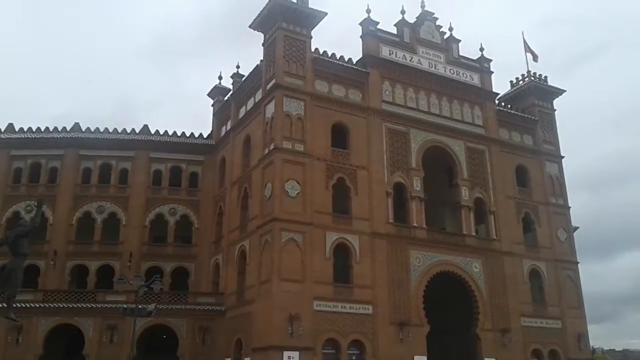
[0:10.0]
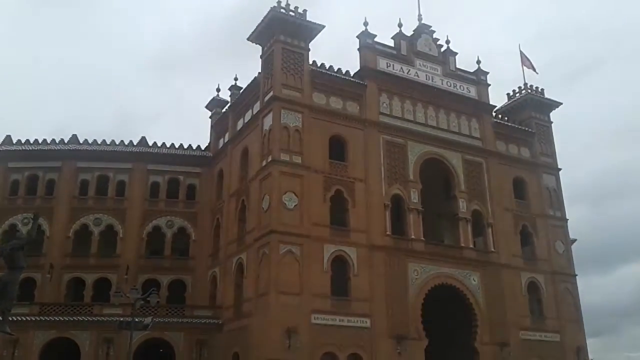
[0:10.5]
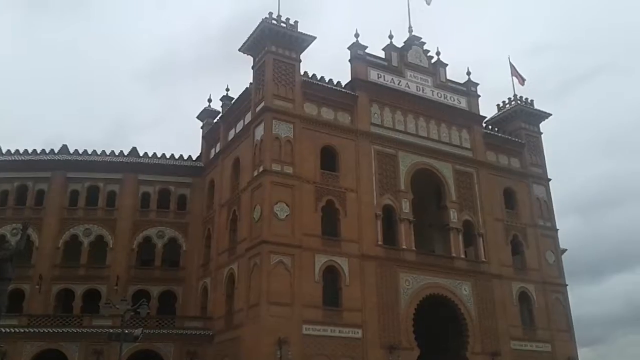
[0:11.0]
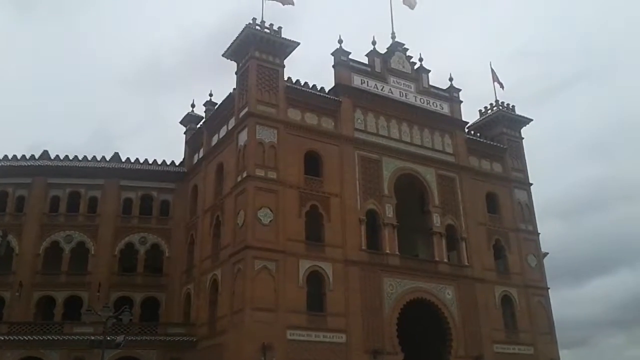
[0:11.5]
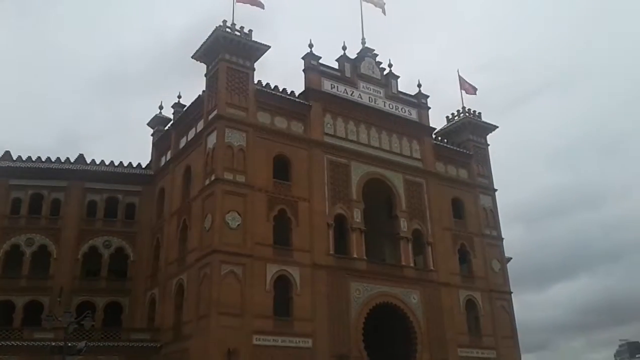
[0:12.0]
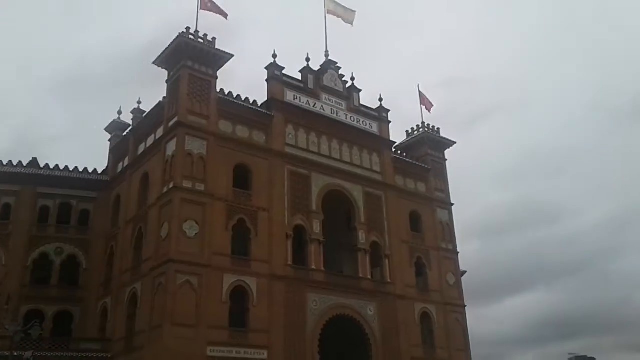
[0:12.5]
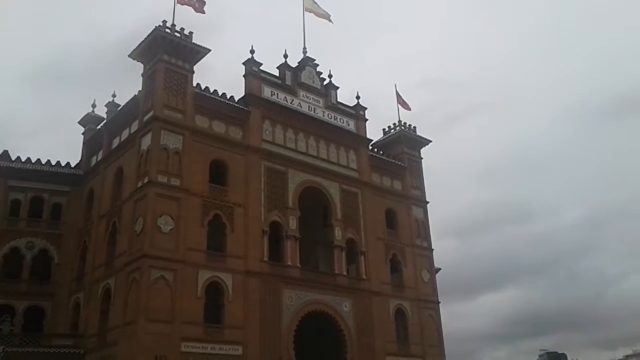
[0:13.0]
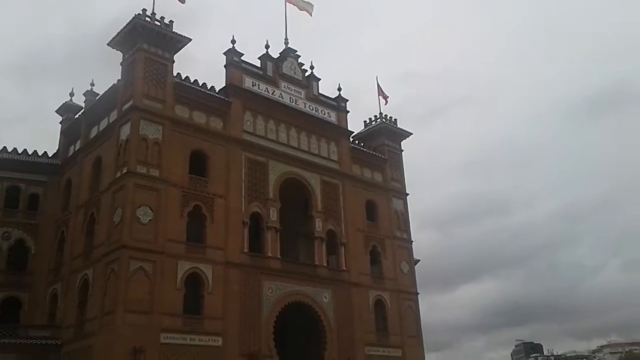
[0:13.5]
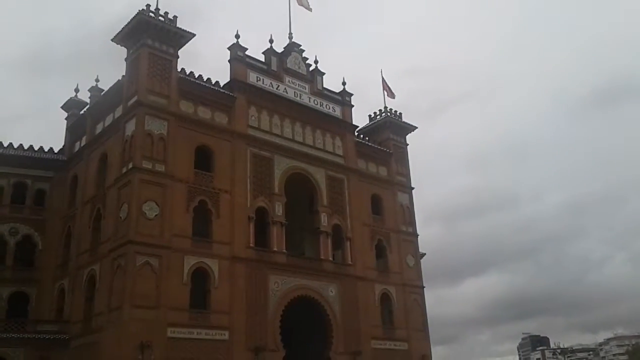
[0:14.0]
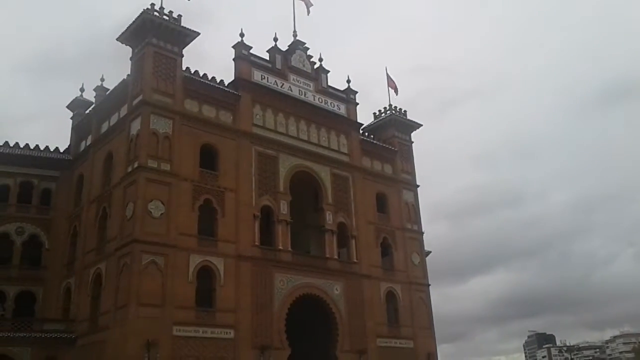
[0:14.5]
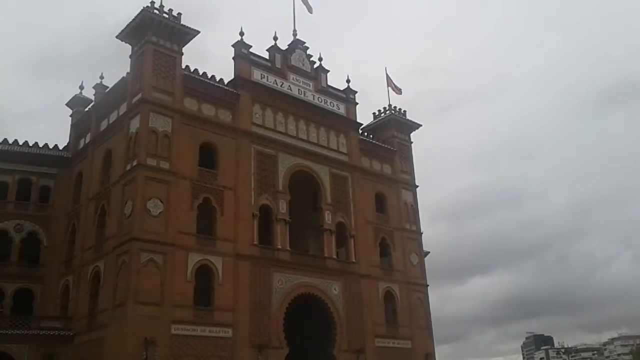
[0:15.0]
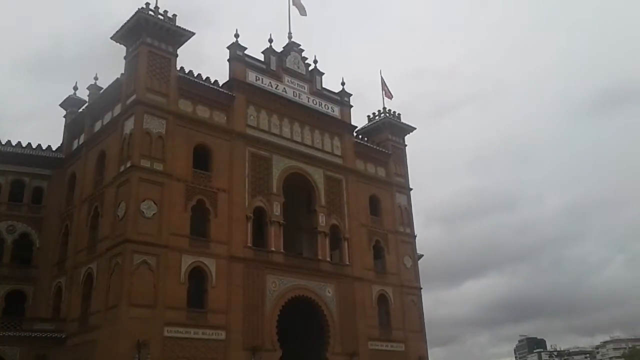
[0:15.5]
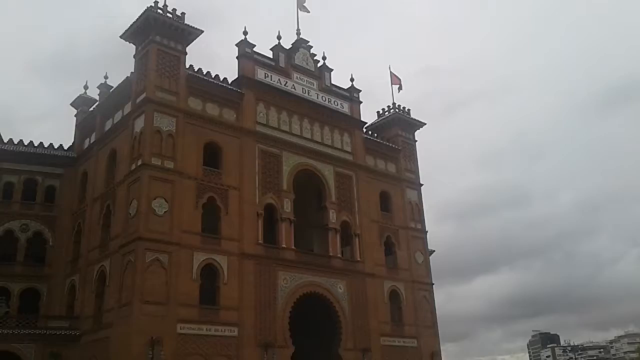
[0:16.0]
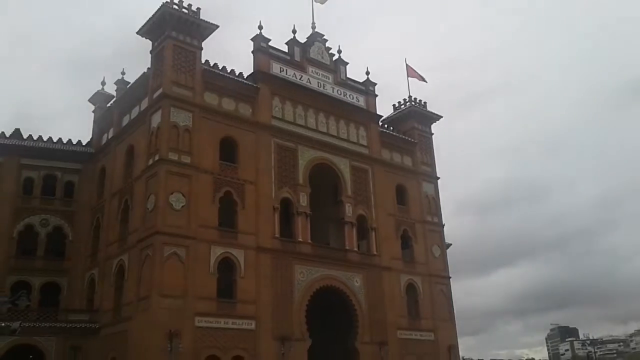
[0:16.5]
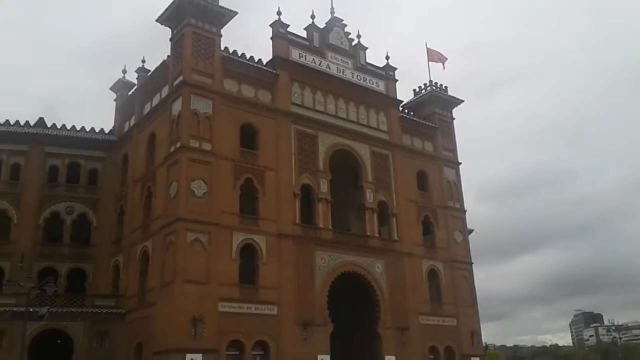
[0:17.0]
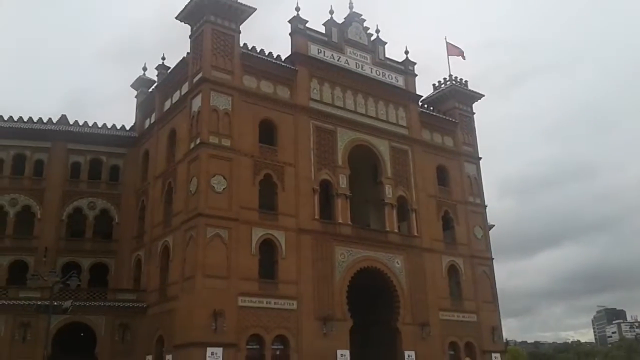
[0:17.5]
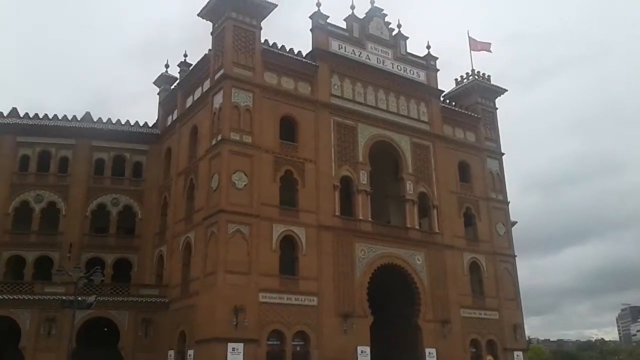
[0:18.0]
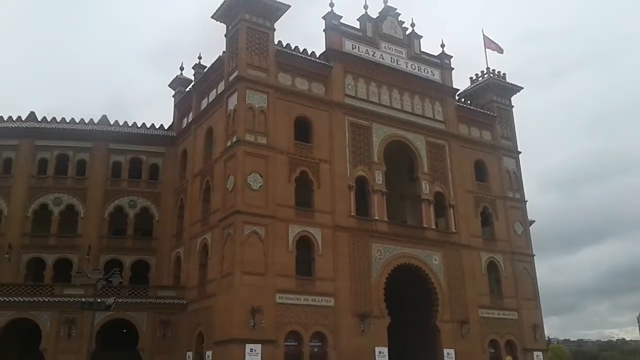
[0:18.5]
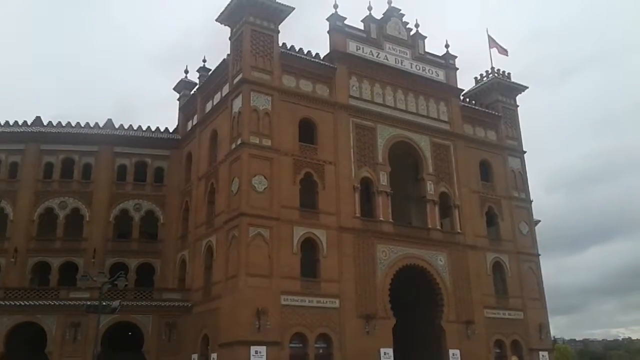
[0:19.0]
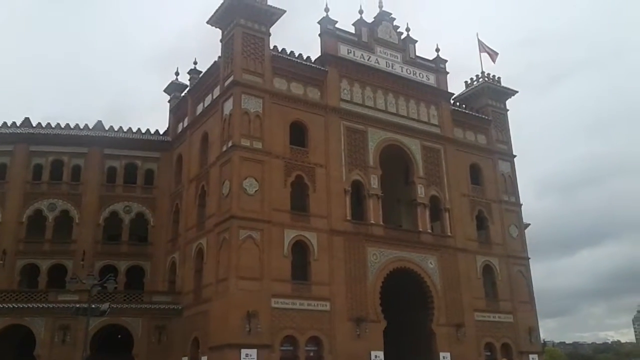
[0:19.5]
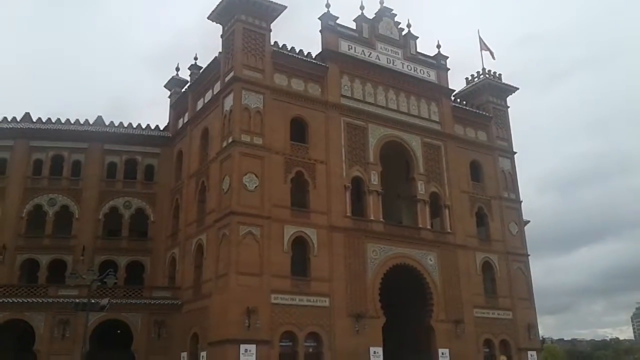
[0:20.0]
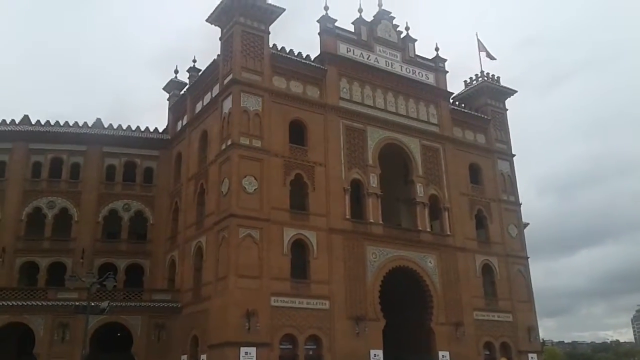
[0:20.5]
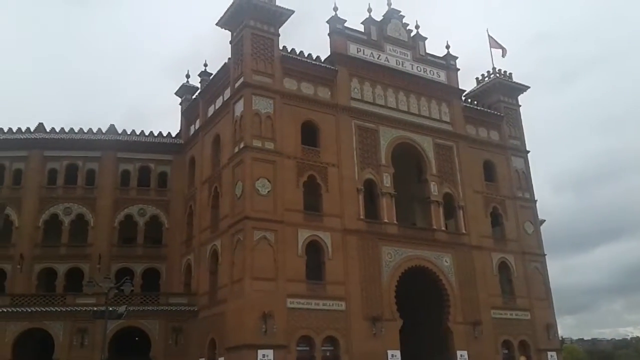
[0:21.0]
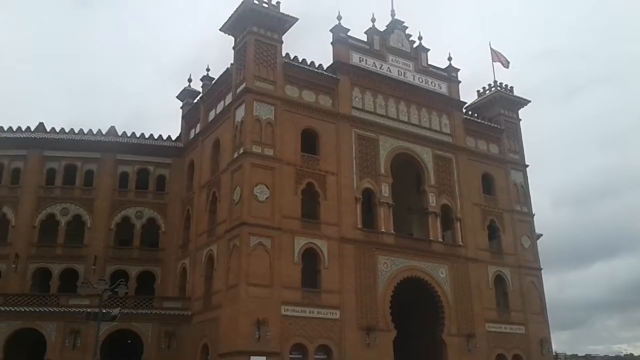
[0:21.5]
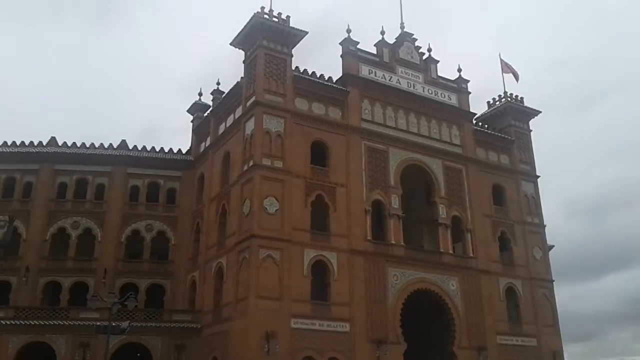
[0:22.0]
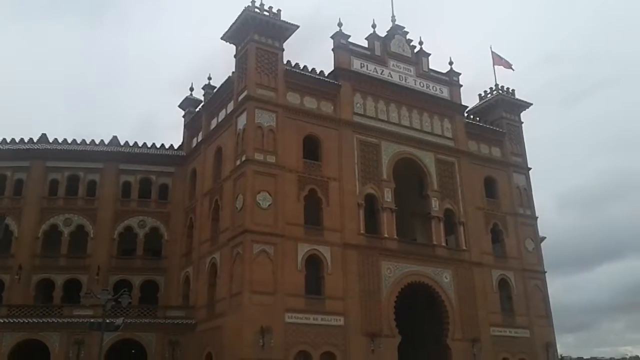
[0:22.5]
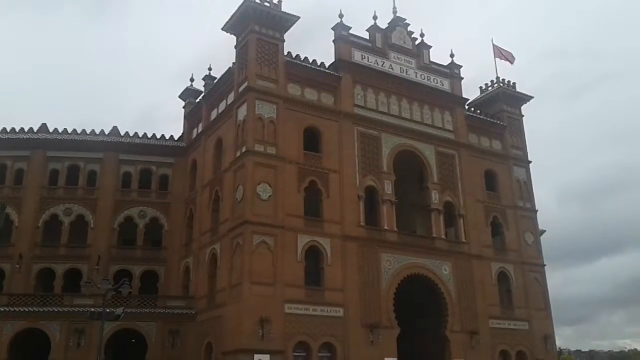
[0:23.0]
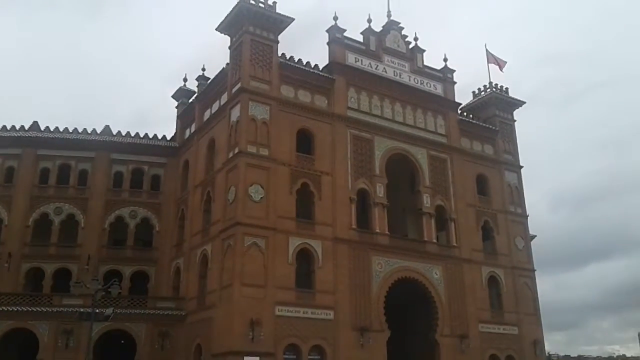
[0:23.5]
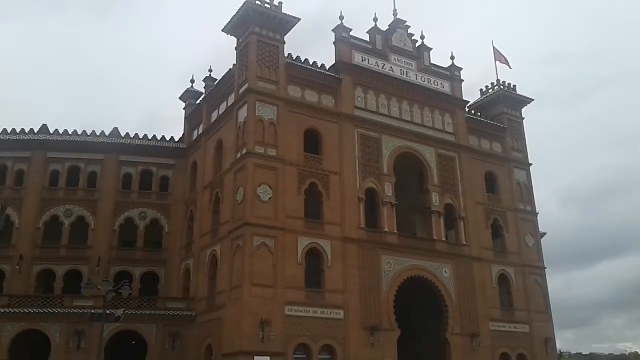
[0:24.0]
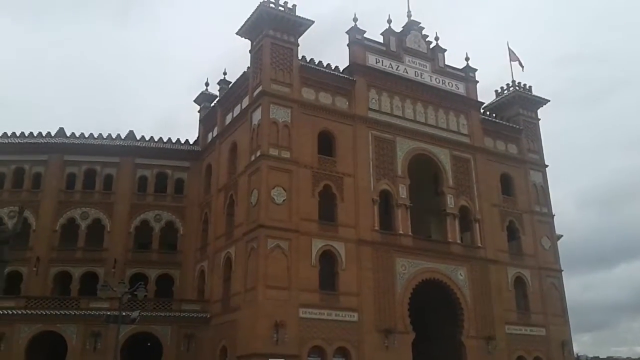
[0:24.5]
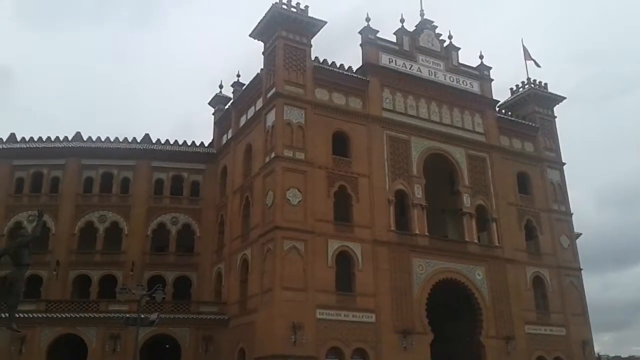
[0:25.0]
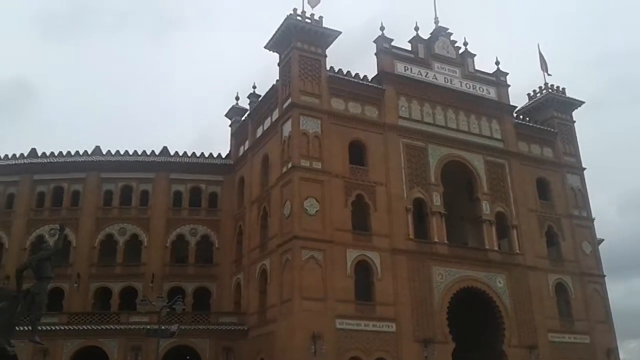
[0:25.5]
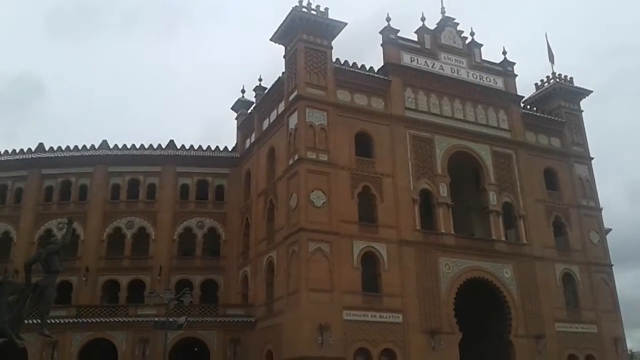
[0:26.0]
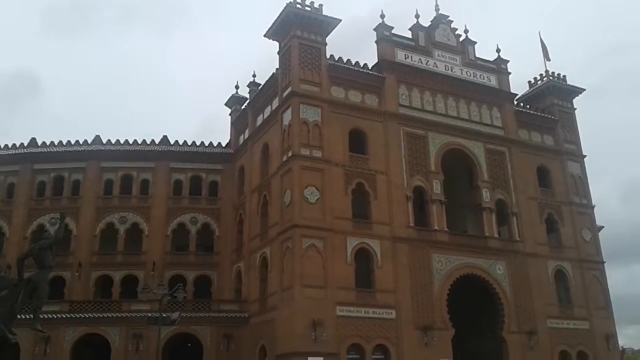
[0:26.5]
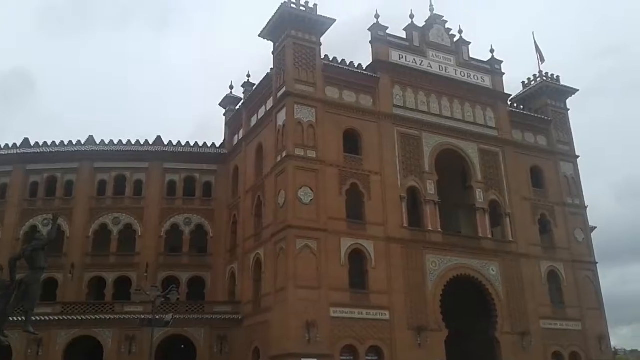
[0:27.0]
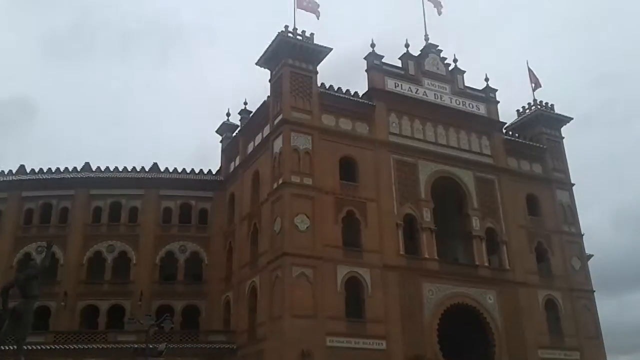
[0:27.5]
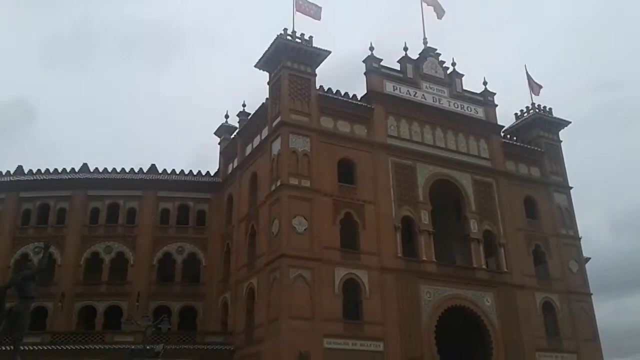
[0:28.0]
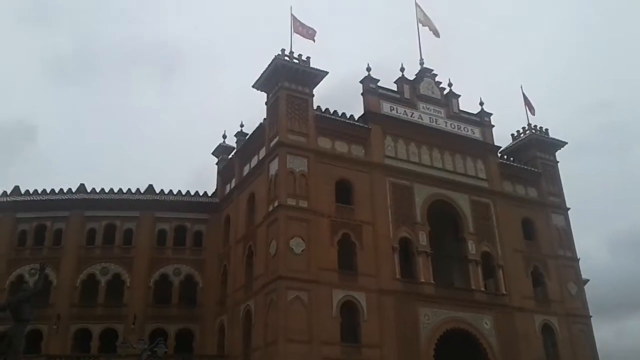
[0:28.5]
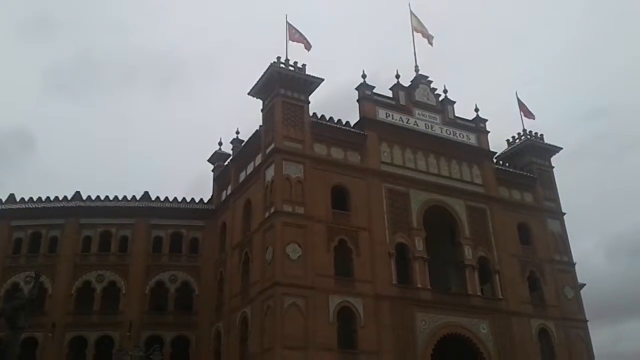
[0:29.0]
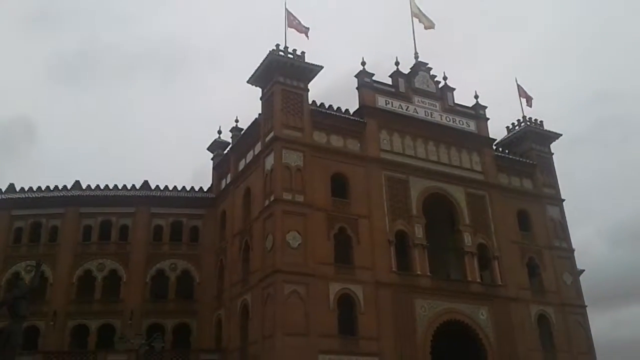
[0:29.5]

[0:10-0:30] An upward view shows the Plaza de Toros, a building possibly in Spain. Three flags are on top of the building; two of them appear to be red, while the color of the third can't be made out against the cloudy background. The sky is very cloudy, and it appears to rain occasionally. The front part of the building, the entryway, is a cubic rectangle with arched windows and doors. There appear to be frescoes on the walls, though not enough detail is visible to tell what they are. The side of the building looks like it starts into a curve like that of a coliseum, with walkways covered in arches. The building appears to be red brick or clay. There are a few spires with spikes on them, and the curved coliseum portion has a spiky rooftop.